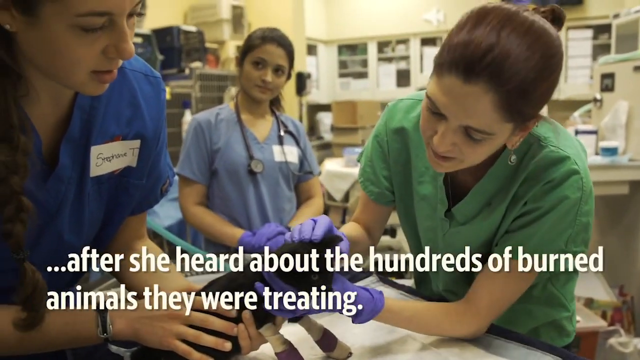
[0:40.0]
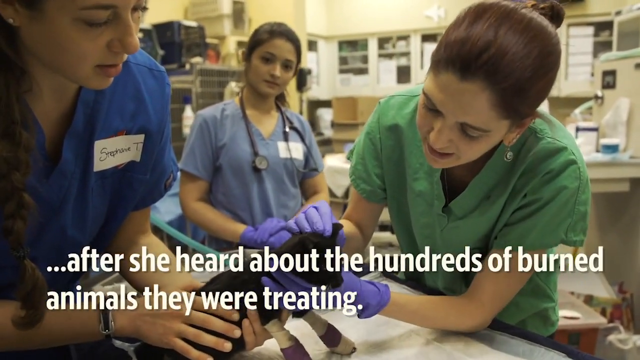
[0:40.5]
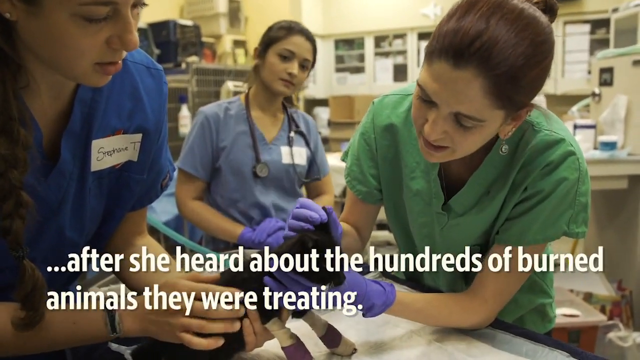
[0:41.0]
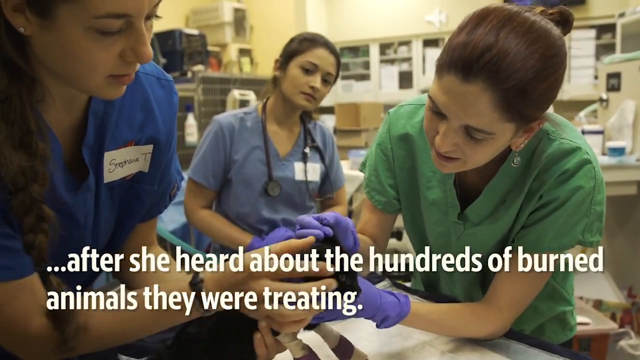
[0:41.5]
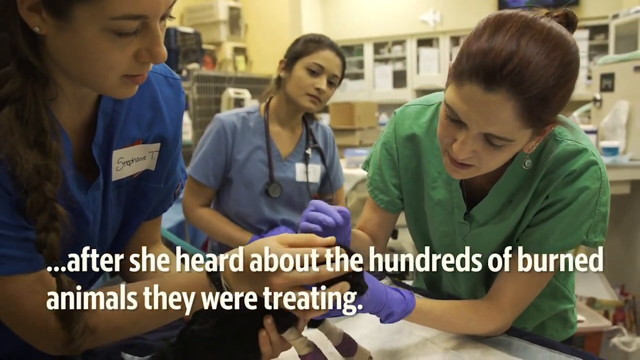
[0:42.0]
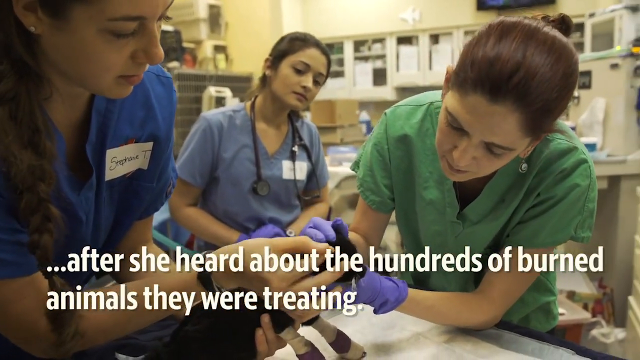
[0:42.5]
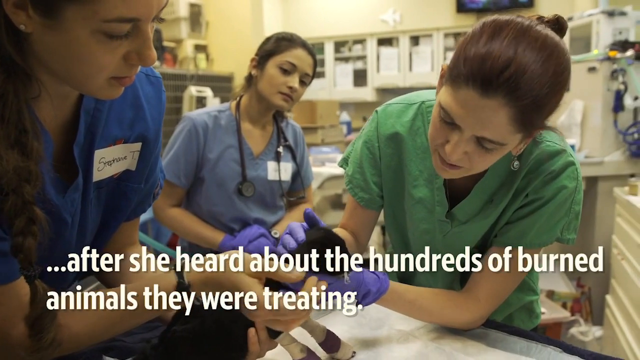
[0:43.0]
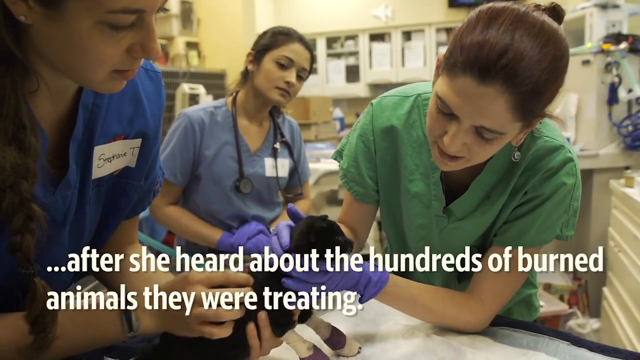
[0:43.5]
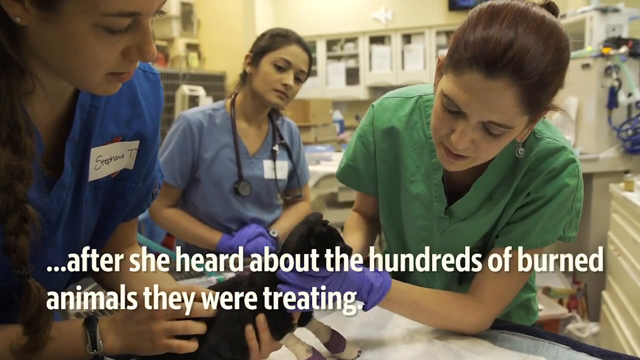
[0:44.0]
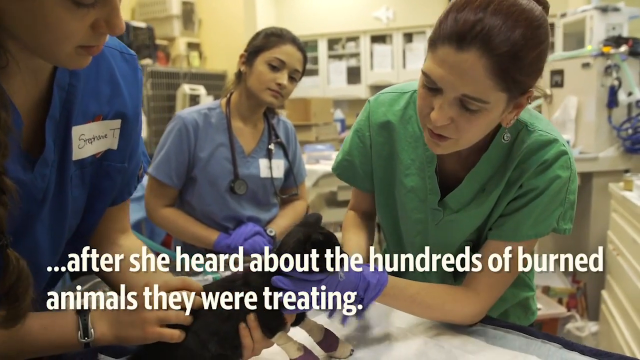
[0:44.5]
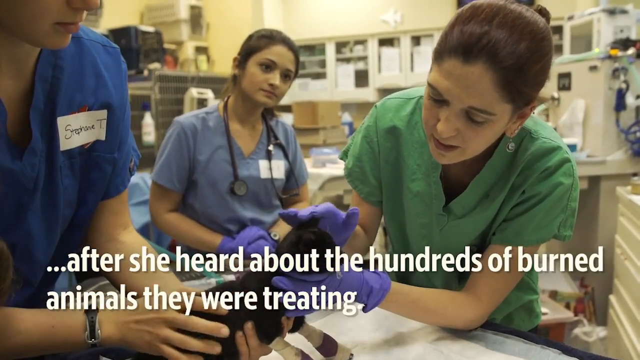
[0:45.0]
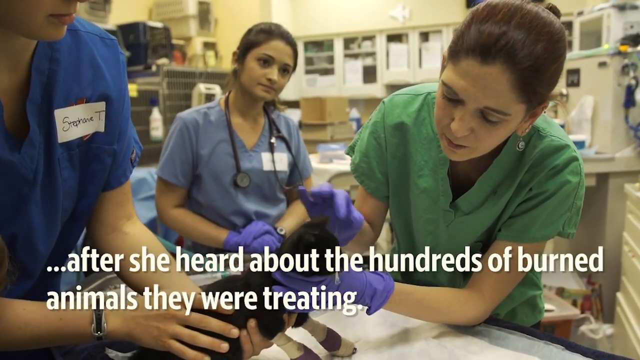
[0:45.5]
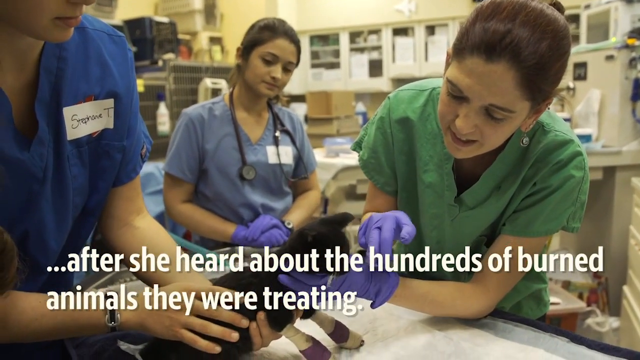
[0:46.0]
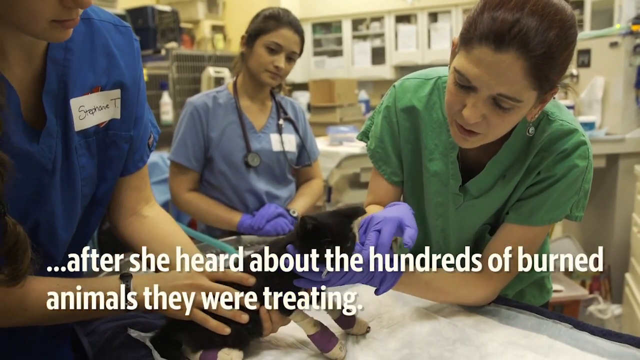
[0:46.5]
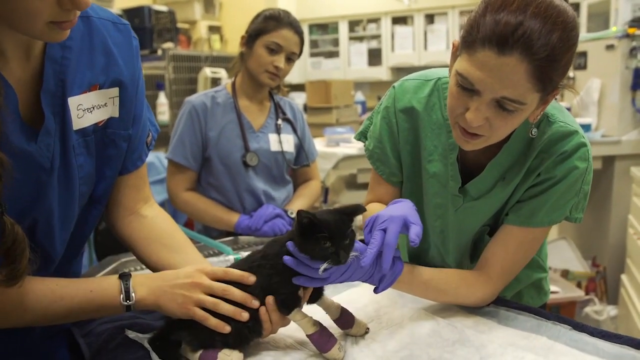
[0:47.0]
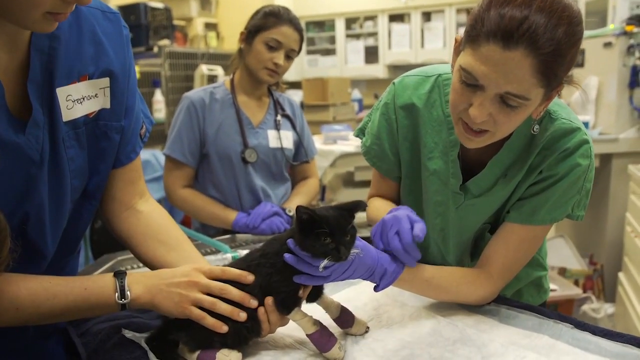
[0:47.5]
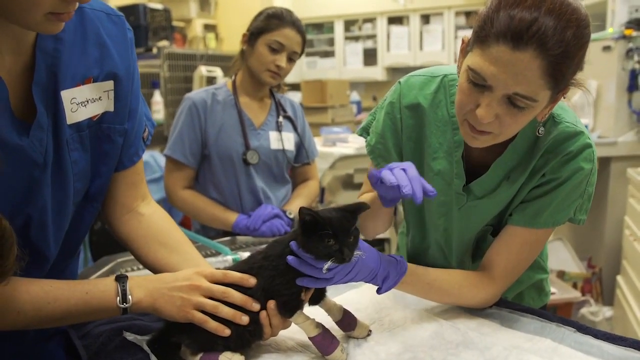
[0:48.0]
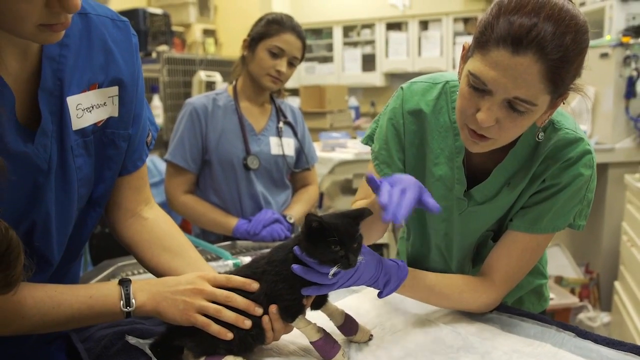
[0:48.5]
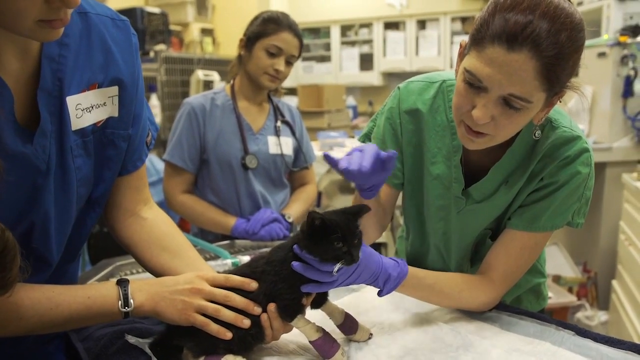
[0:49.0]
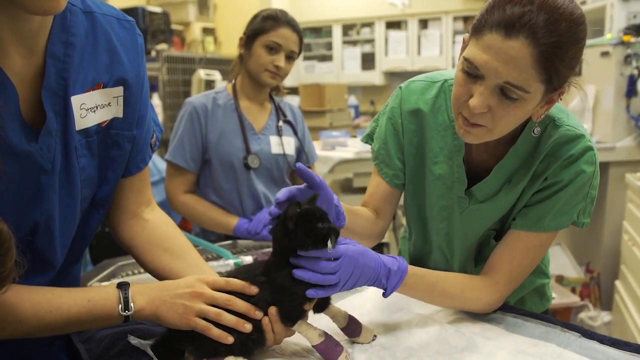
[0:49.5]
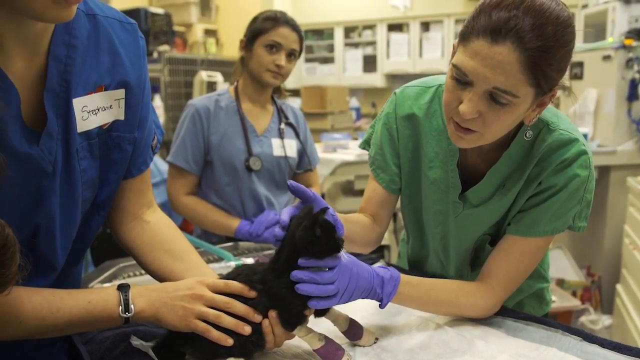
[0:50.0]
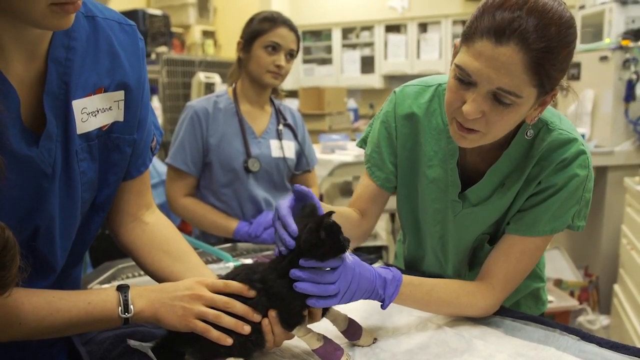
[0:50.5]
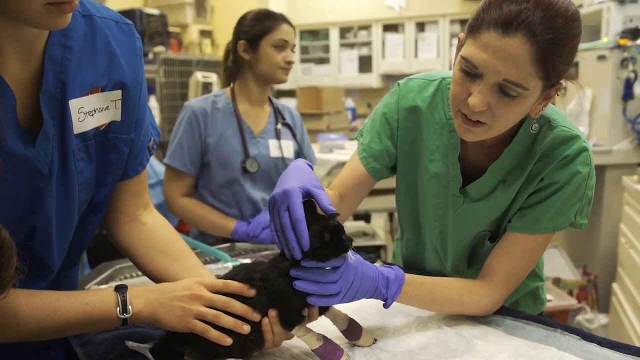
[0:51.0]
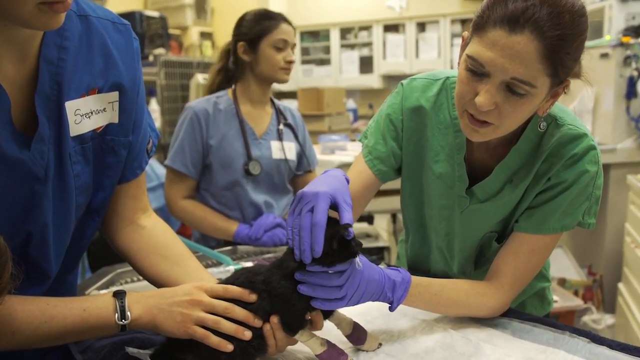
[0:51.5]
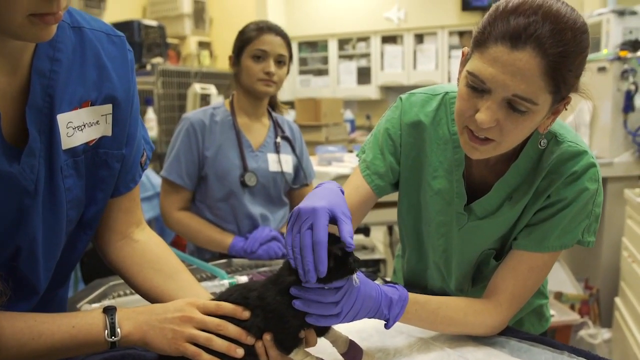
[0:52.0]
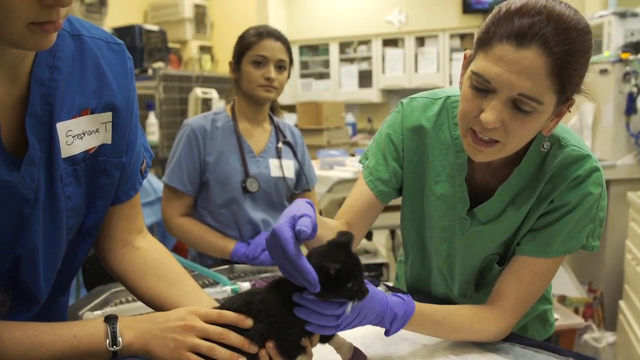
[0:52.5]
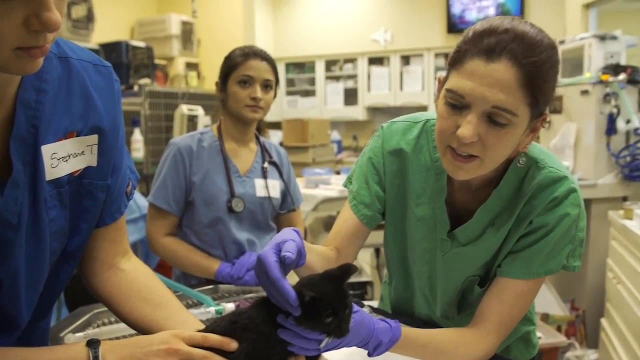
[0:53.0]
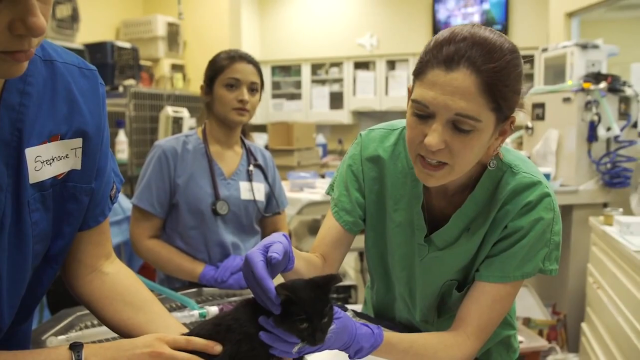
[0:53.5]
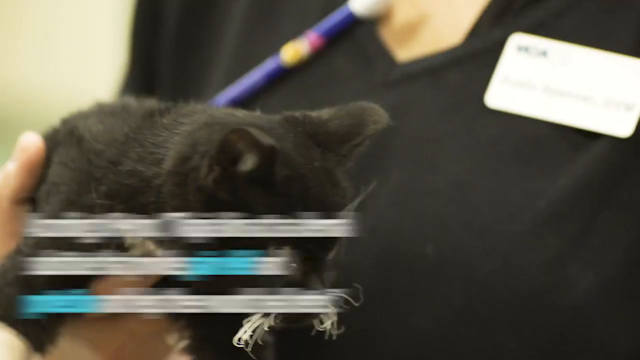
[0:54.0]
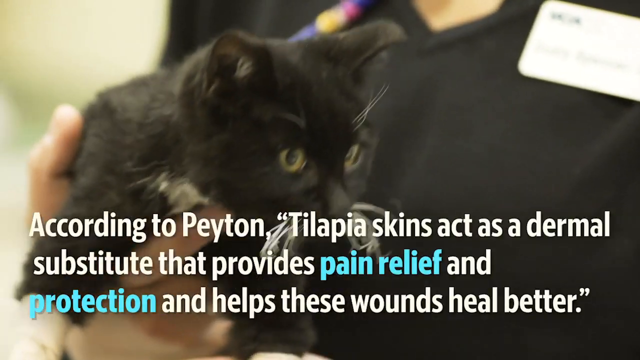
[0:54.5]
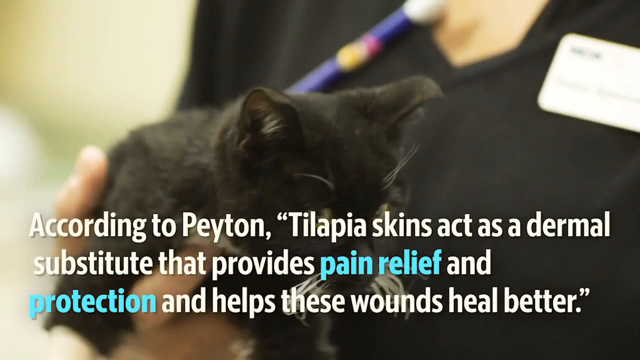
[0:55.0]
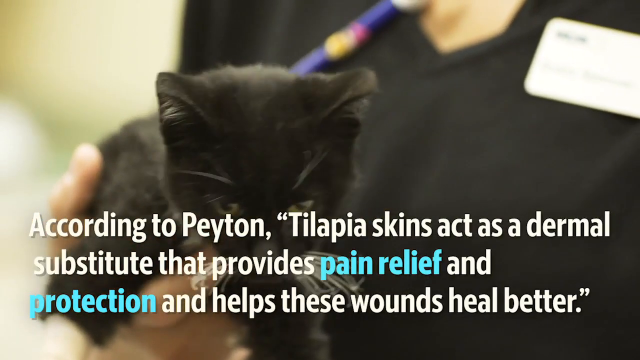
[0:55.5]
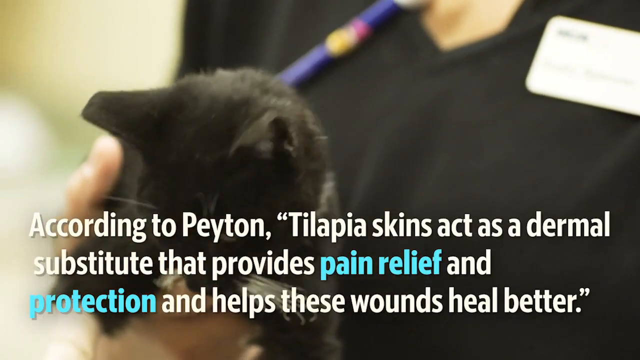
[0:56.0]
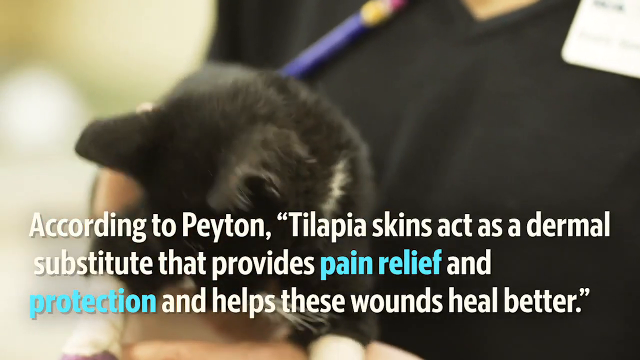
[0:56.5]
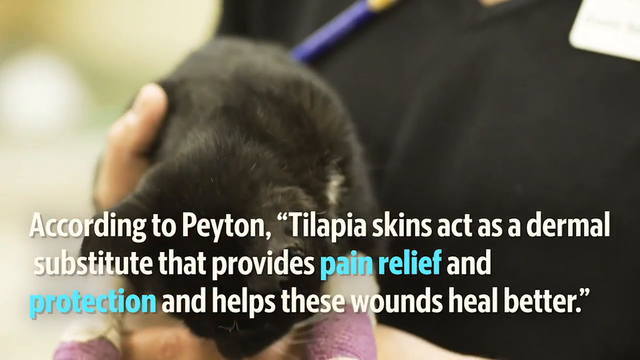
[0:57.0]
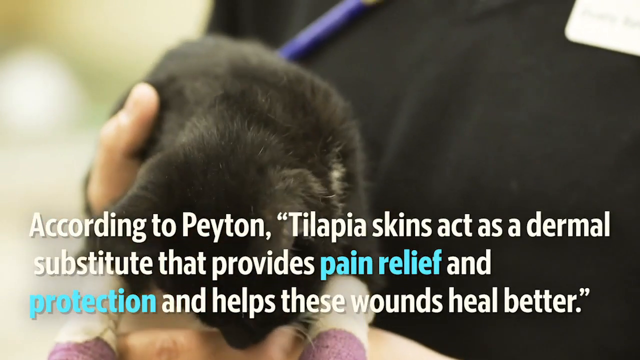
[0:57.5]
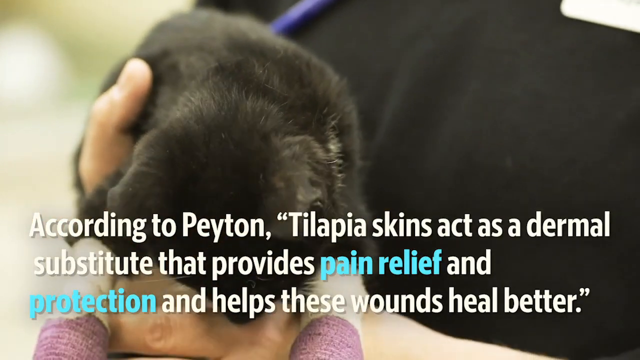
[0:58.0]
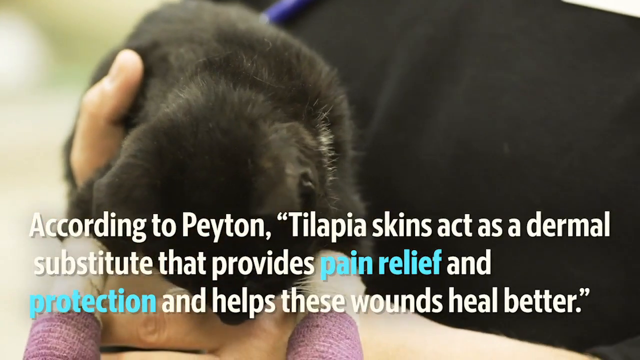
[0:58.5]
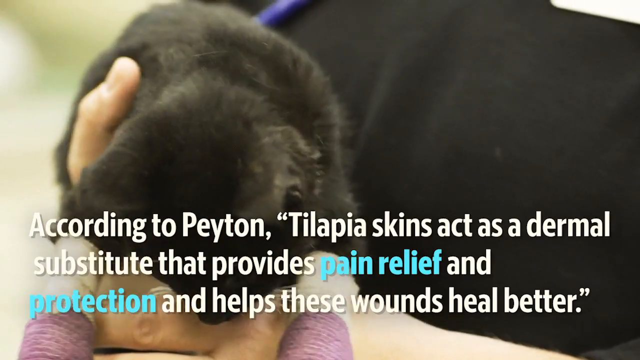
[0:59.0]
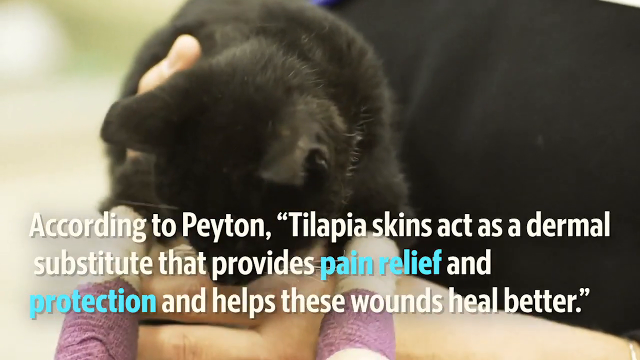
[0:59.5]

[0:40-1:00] Text overlaid on the video reads: "after she heard about the hundreds of burnt animals they were treating," while a woman in green scrubs talks to two other women in dark blue and light blue scrubs. Then text reads: "according to Peyton, tilapia skins act as a dermal substitute that provides pain relief and protection, and helps these wounds heal better." As those words appear, a small, black, young cat is shown, possibly the animal being treated. The women admire the cat and rub him, possibly comforting him, as he appears to have been burned. His front two paws are wrapped in bandages, apparently indicating they are using tilapia skin to treat the burns. The setting appears to be some type of veterinary clinic or surgical operating room.